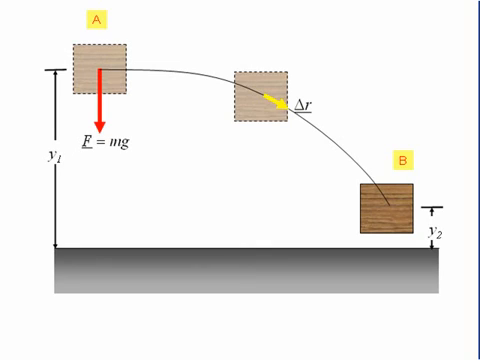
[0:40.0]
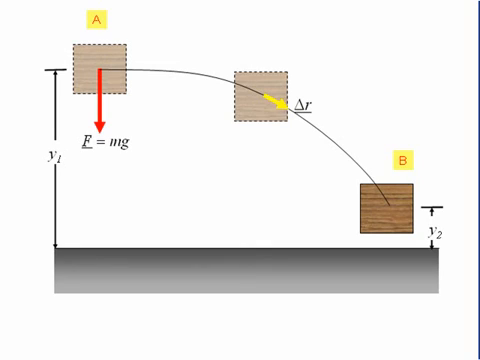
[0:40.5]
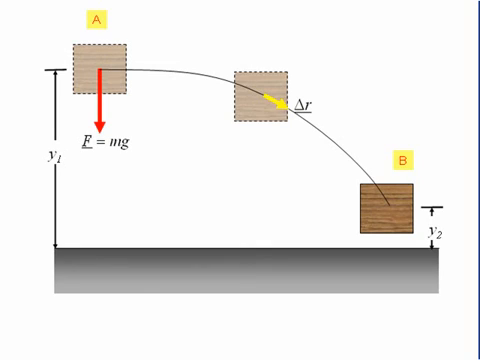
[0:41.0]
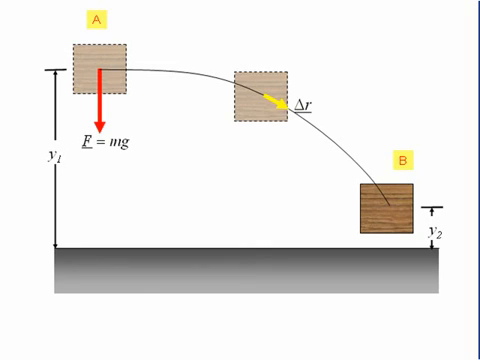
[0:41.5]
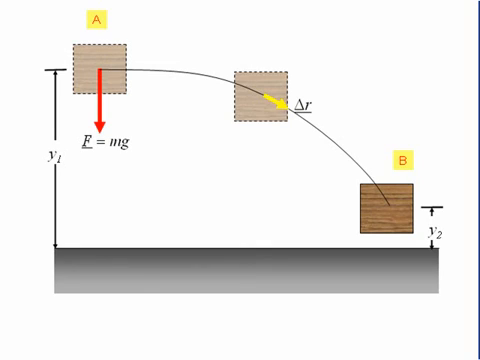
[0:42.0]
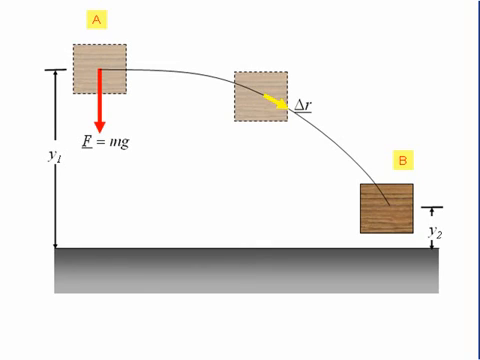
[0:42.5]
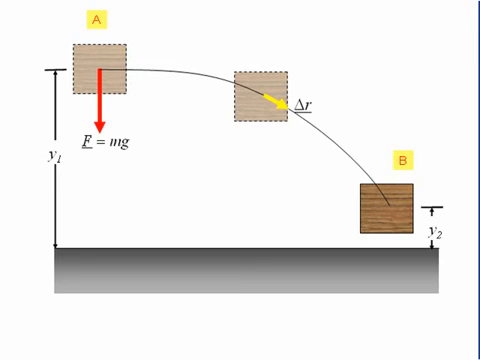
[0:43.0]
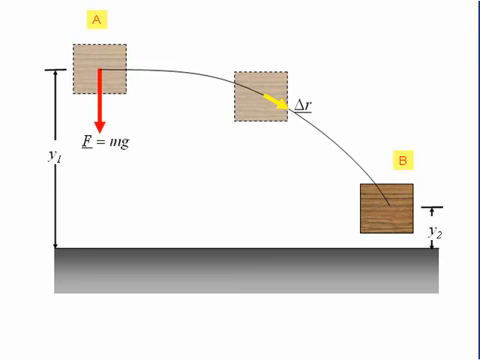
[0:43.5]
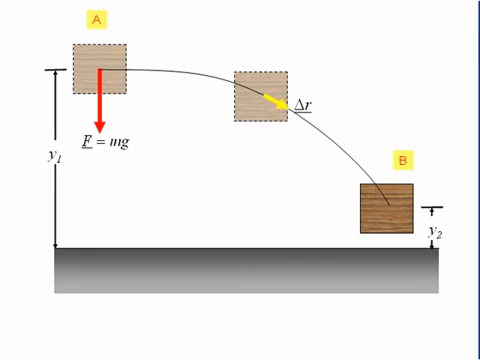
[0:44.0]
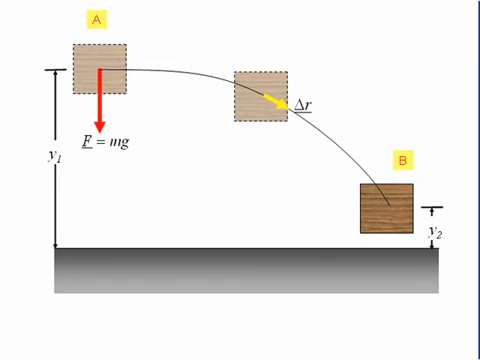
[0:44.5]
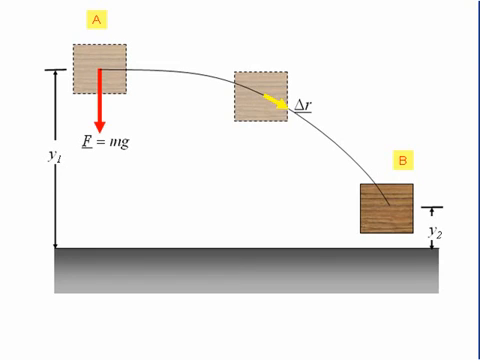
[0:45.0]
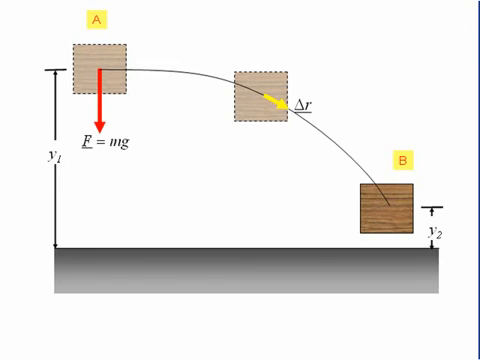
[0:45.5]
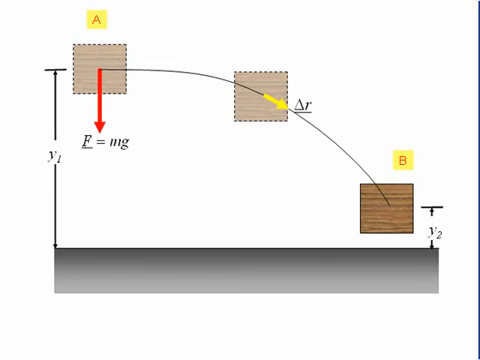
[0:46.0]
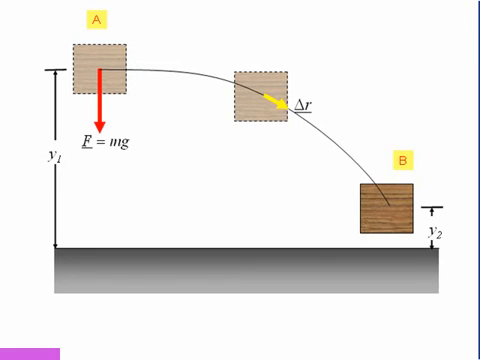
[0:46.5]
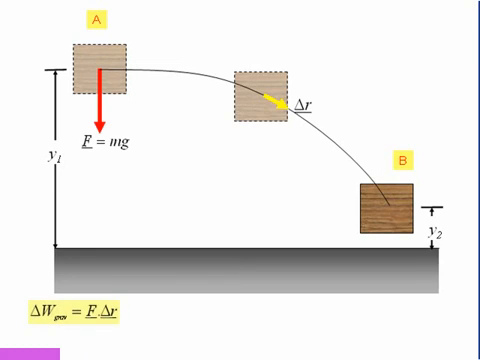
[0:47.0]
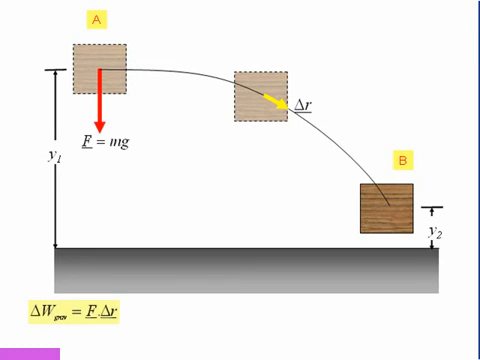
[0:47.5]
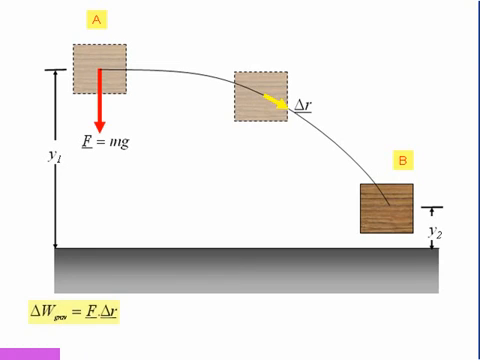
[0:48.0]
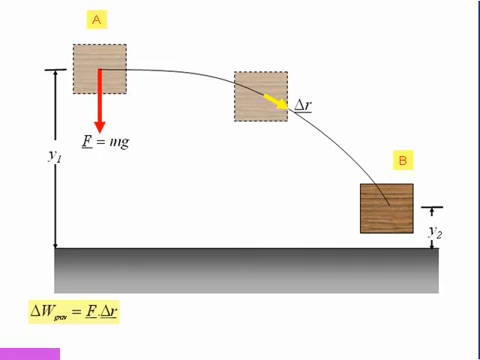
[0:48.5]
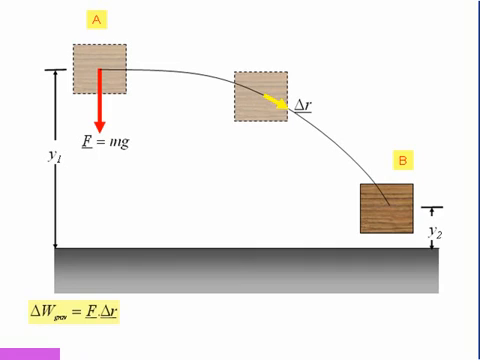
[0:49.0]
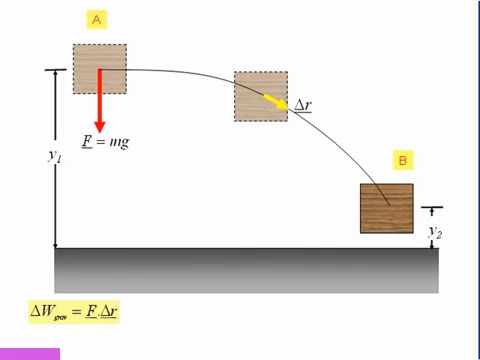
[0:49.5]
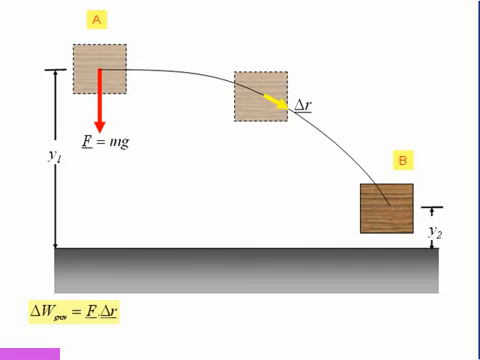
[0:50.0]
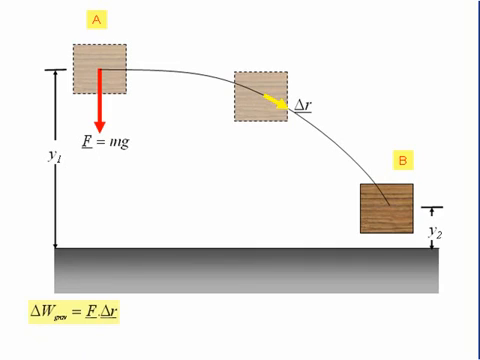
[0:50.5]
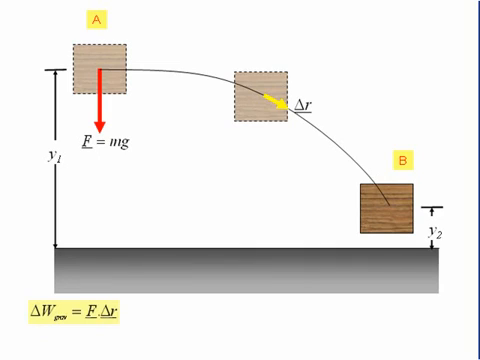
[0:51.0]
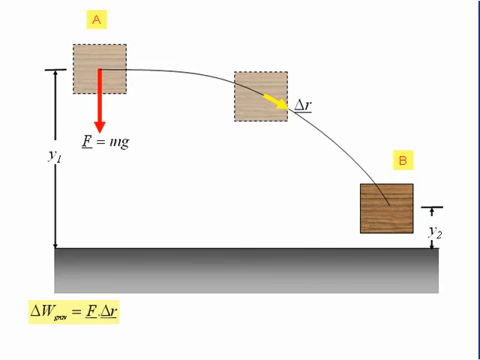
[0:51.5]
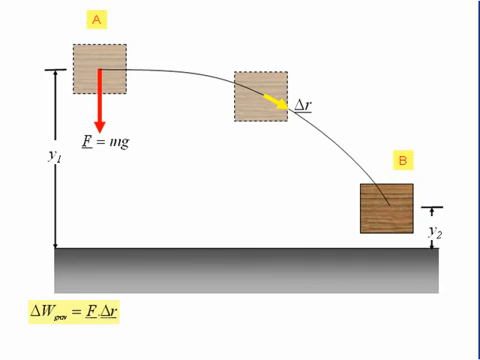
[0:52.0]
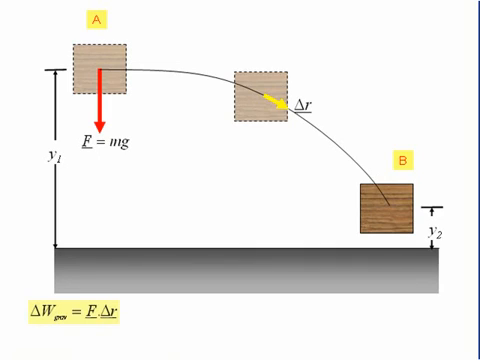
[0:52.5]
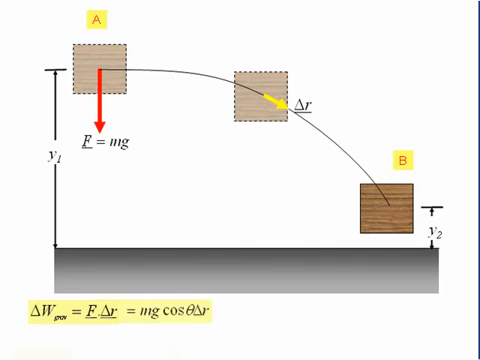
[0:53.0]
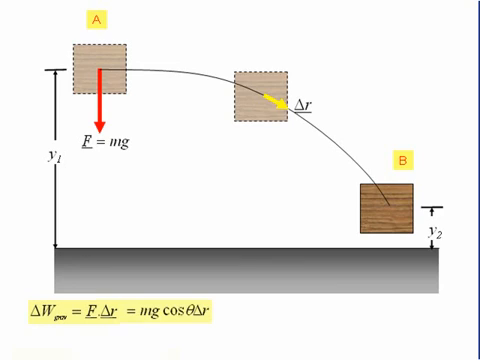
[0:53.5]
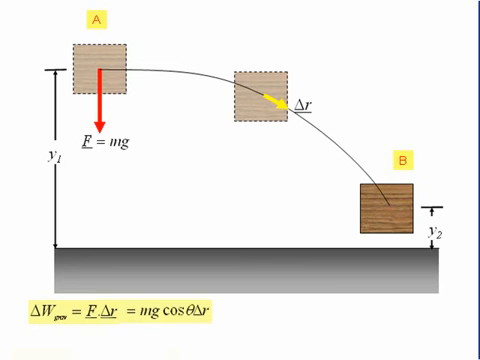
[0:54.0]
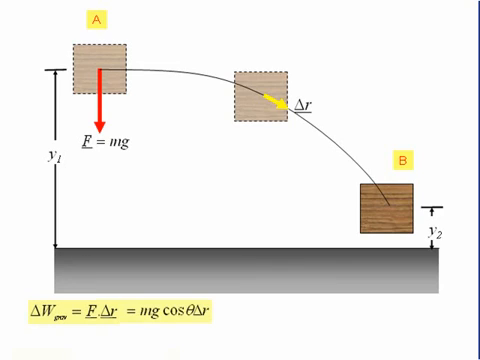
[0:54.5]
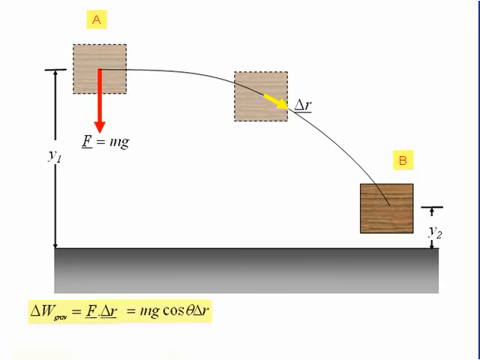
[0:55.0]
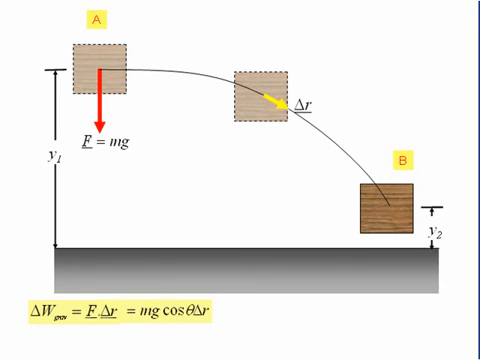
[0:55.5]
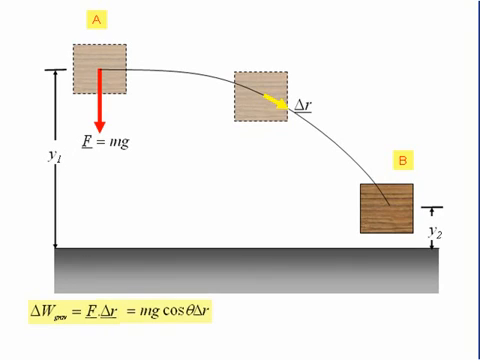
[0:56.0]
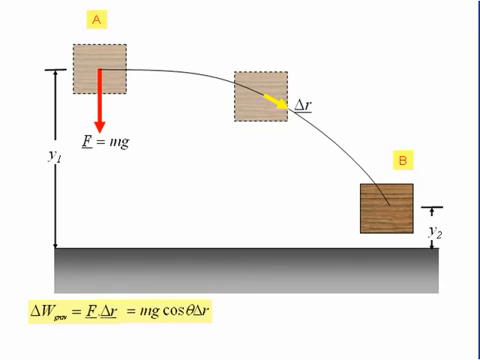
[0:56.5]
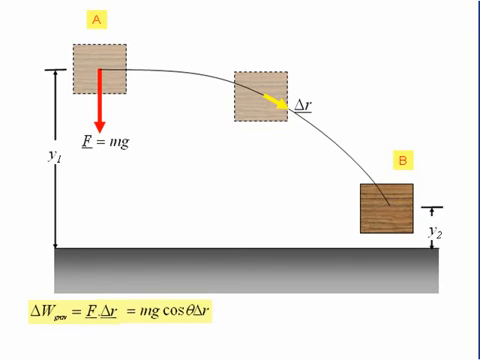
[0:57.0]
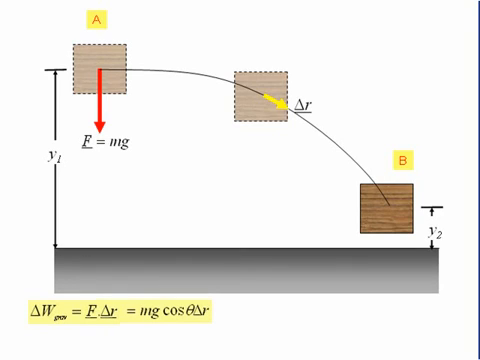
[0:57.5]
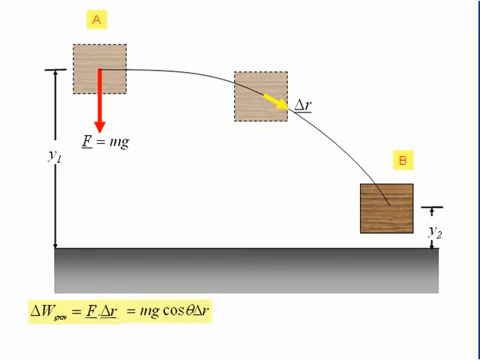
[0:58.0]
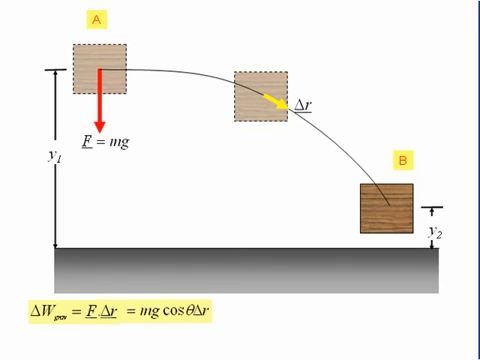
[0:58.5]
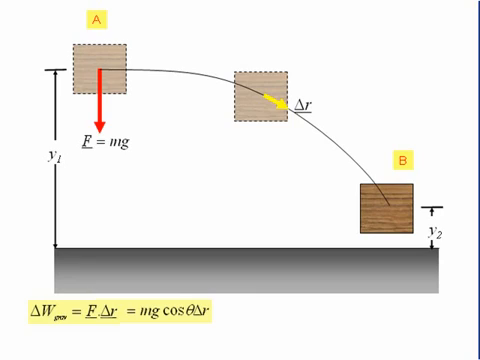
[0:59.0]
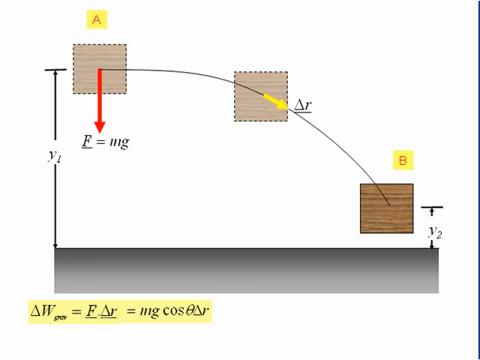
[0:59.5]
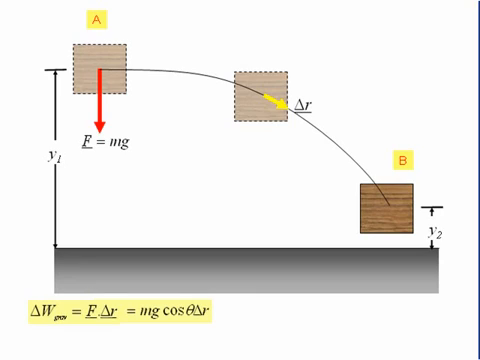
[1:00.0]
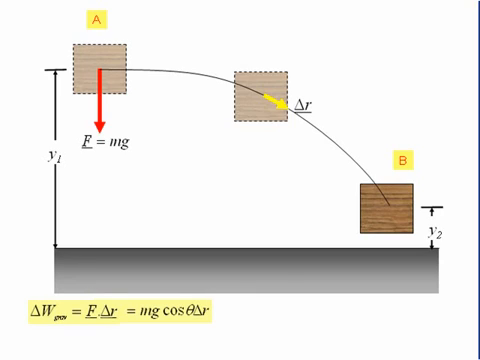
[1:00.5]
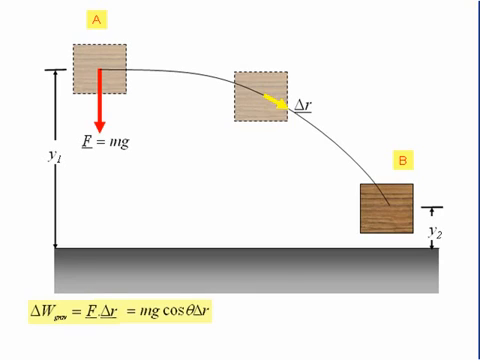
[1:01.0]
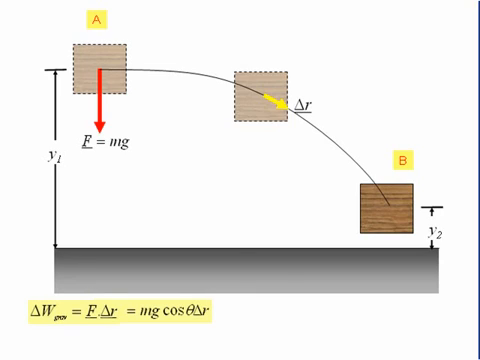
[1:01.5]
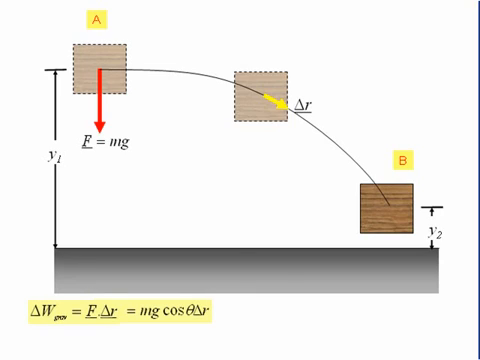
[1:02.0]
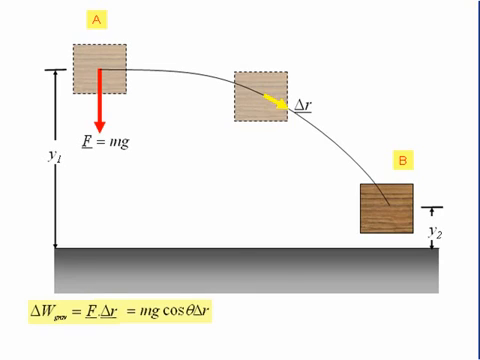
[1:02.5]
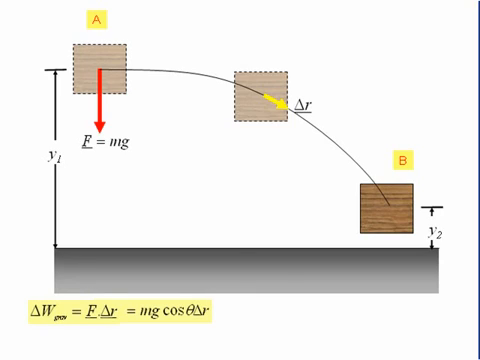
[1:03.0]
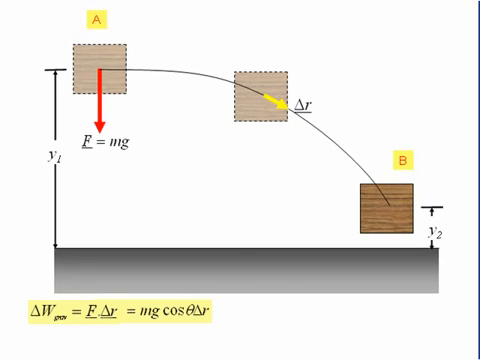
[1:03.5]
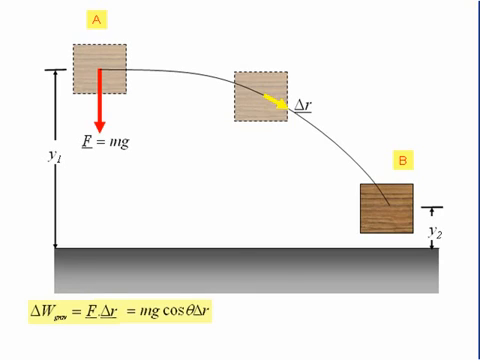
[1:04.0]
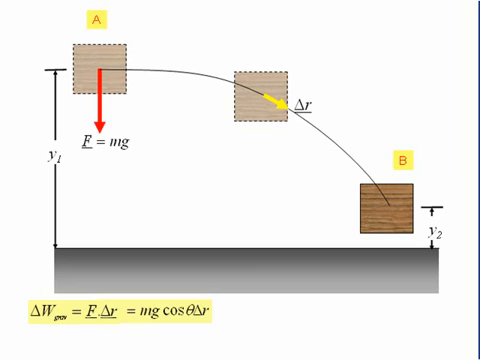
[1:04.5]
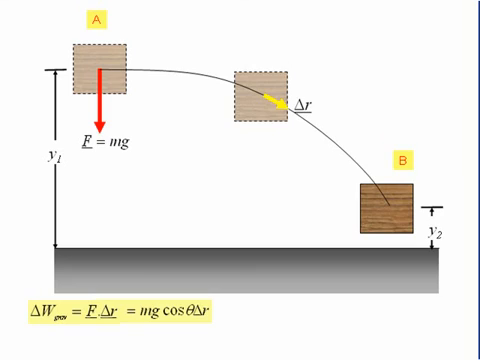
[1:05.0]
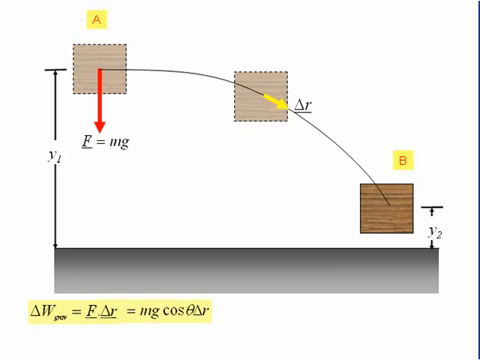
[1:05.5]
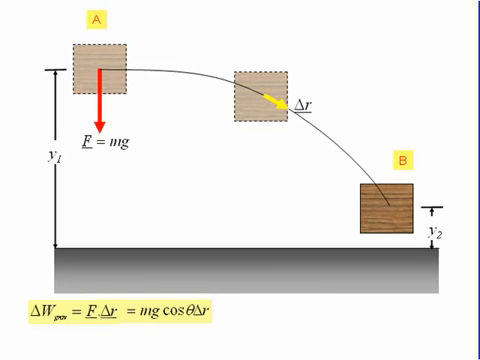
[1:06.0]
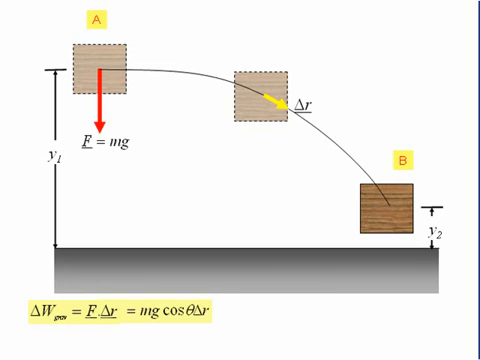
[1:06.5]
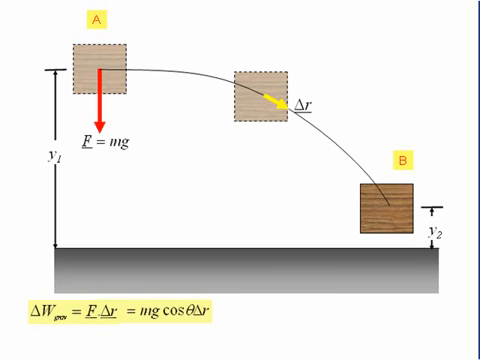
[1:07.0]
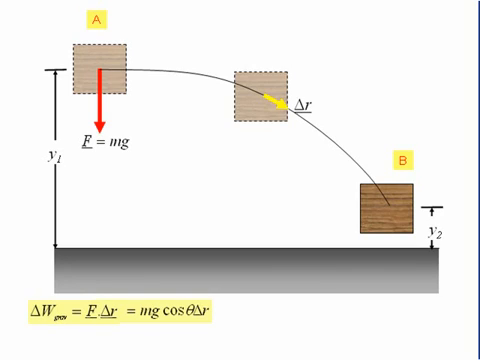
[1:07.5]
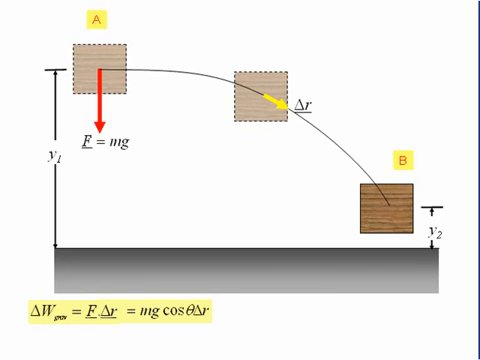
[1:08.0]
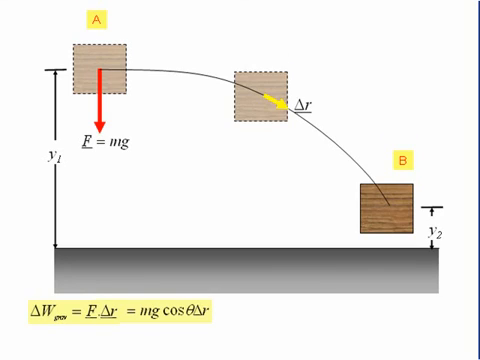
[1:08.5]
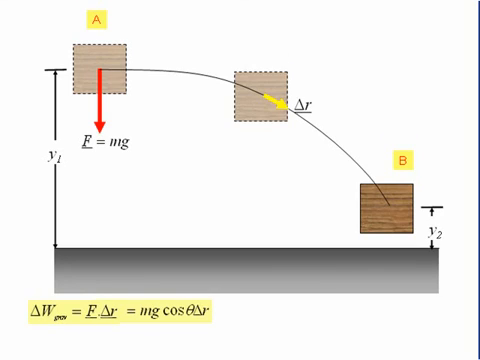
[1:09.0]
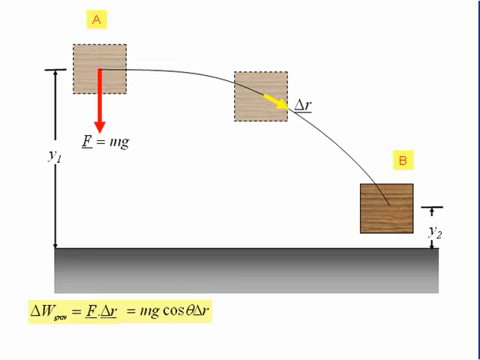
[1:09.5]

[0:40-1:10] A curved line runs from box A to box B. In box A, where the curved line starts, a red arrow goes from the center downward and points at the equation F = mg, with the F underlined. A yellow arrow on the curved line indicates that it runs from box A to box B. On the box in the center there is a triangle and an underlined R. At the bottom of the page an equation pops up: a term with an unclear subscript equals F · ΔR, which equals mg cos θ ΔR, with the F and the ΔR underlined. It is highlighted in yellow.